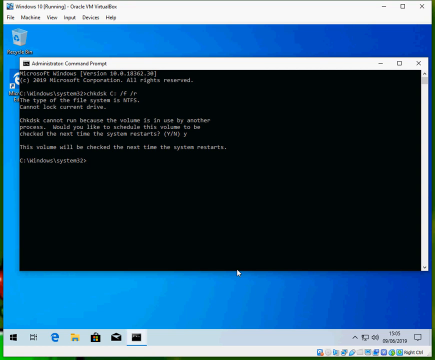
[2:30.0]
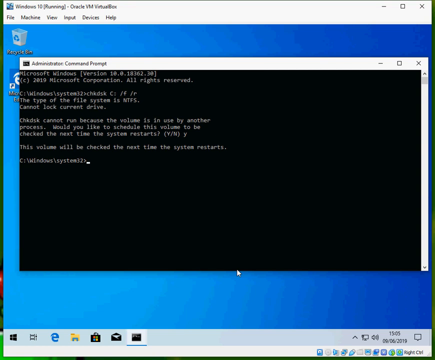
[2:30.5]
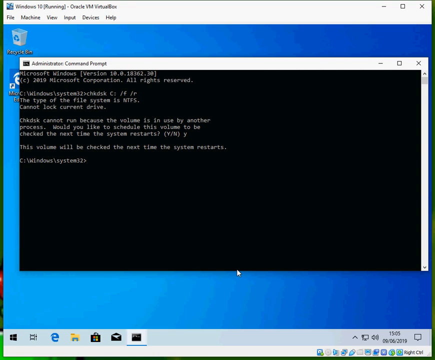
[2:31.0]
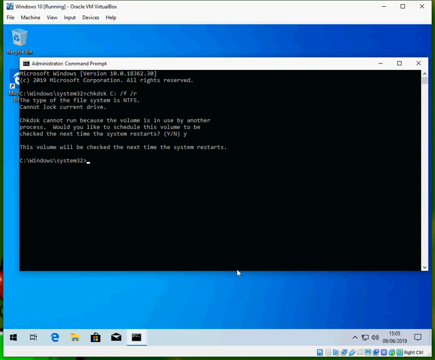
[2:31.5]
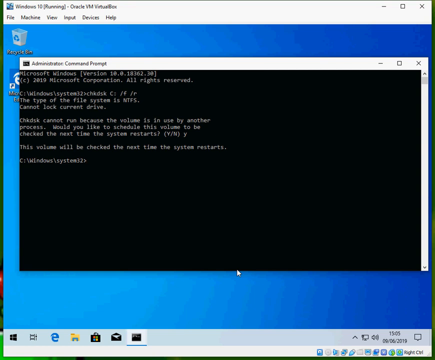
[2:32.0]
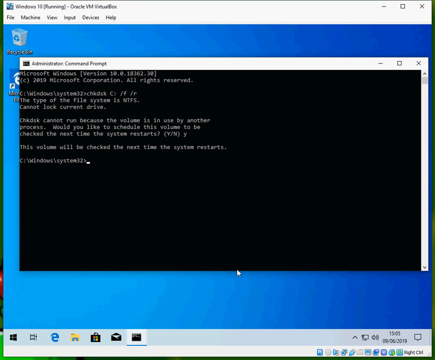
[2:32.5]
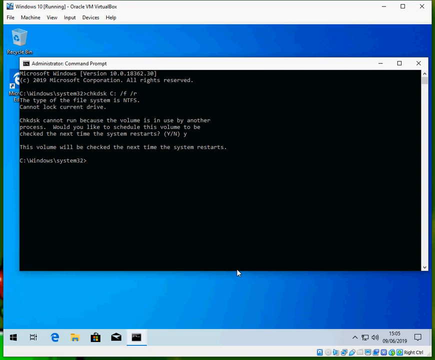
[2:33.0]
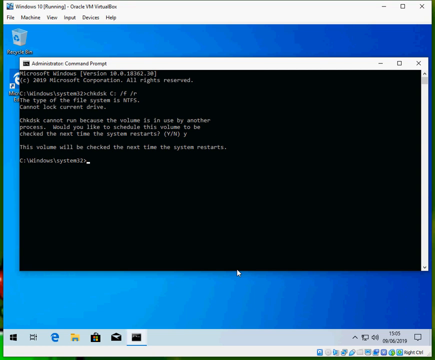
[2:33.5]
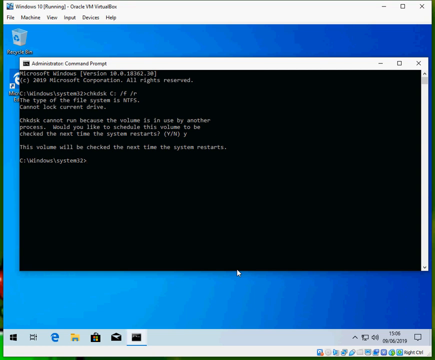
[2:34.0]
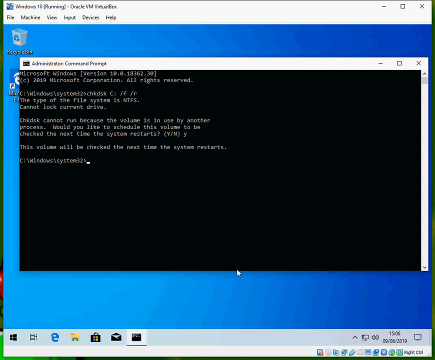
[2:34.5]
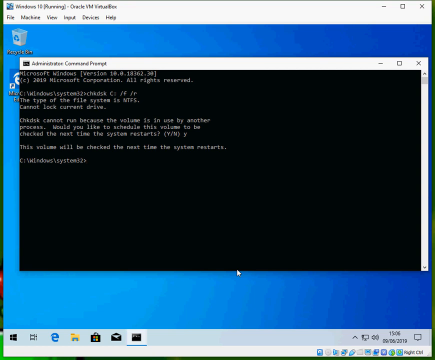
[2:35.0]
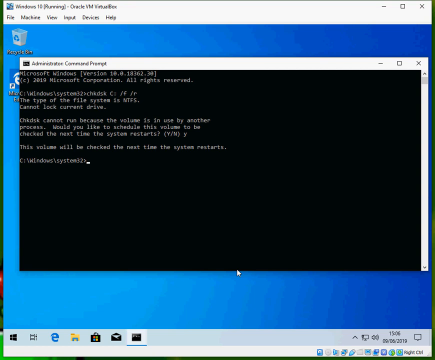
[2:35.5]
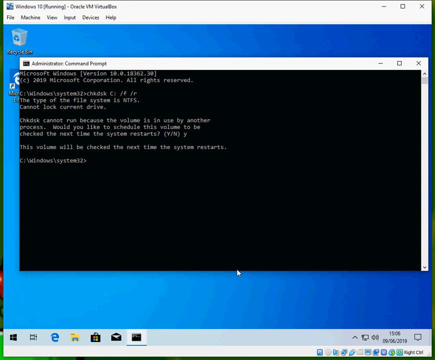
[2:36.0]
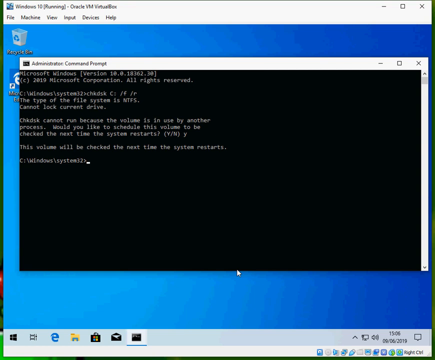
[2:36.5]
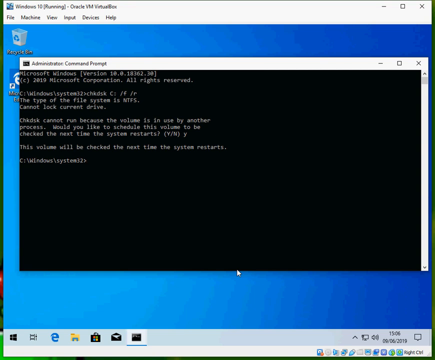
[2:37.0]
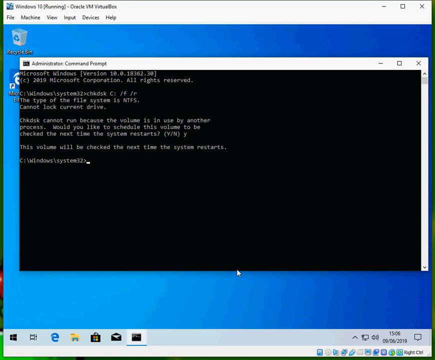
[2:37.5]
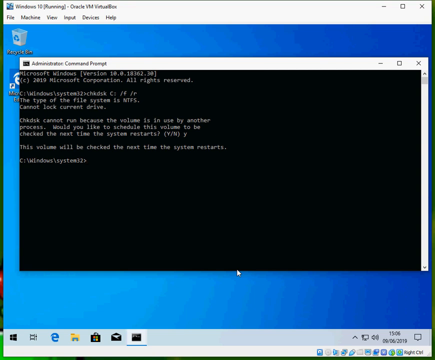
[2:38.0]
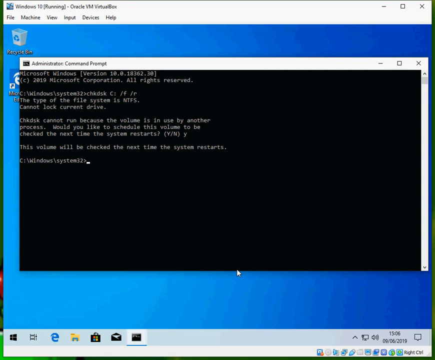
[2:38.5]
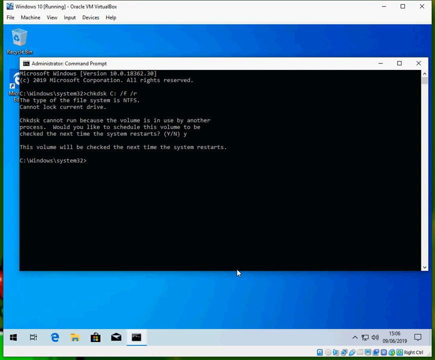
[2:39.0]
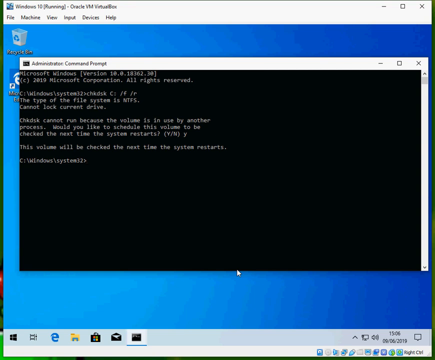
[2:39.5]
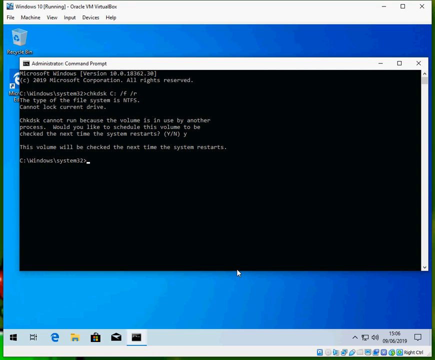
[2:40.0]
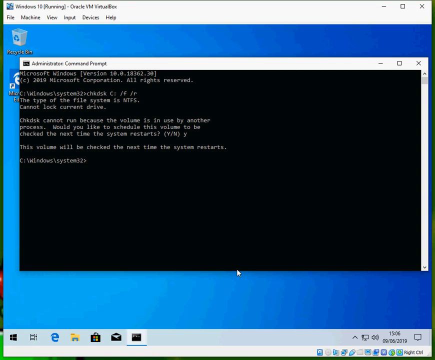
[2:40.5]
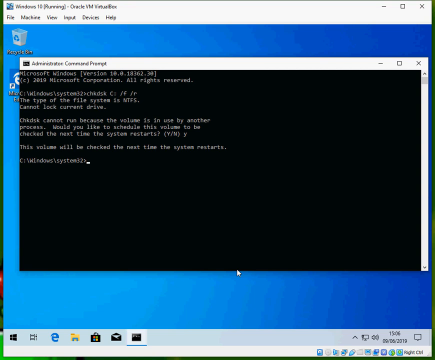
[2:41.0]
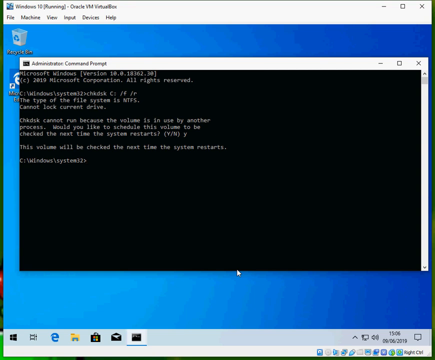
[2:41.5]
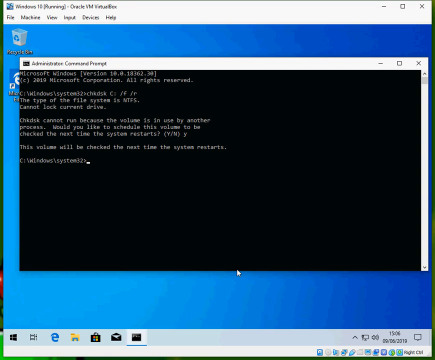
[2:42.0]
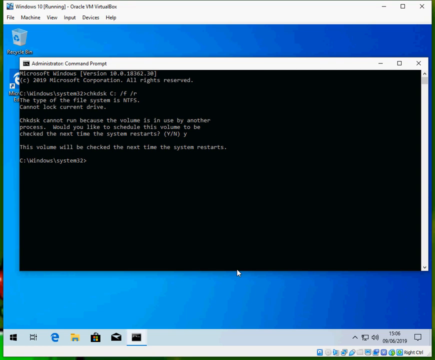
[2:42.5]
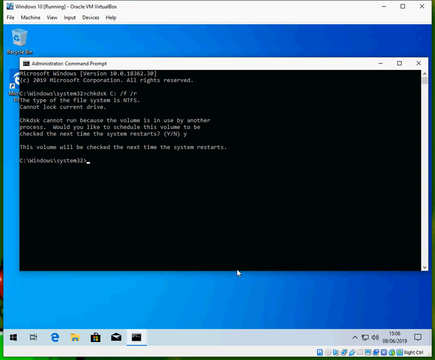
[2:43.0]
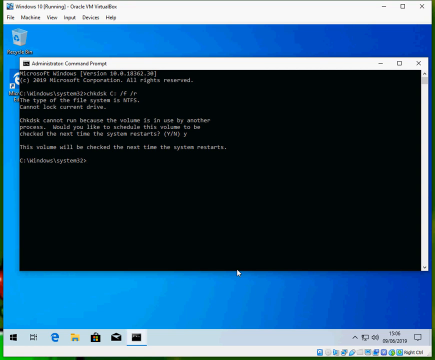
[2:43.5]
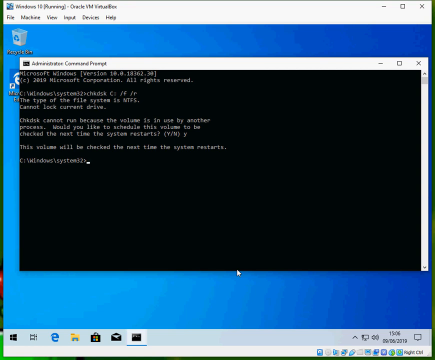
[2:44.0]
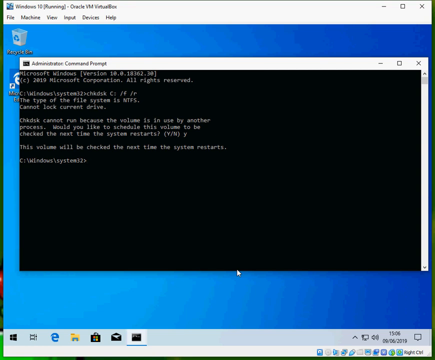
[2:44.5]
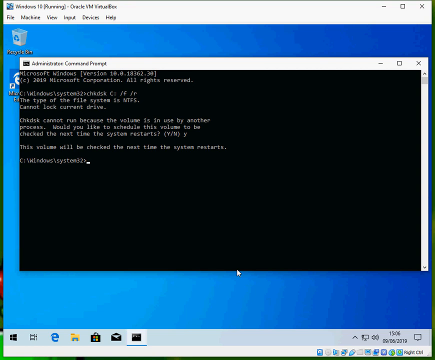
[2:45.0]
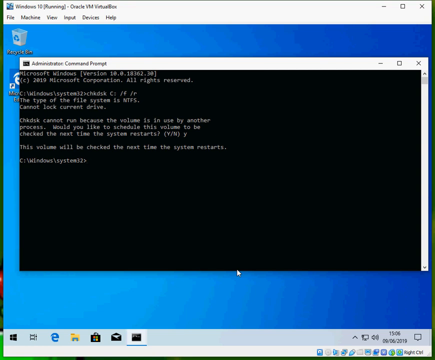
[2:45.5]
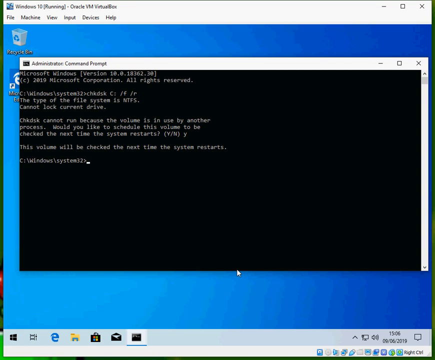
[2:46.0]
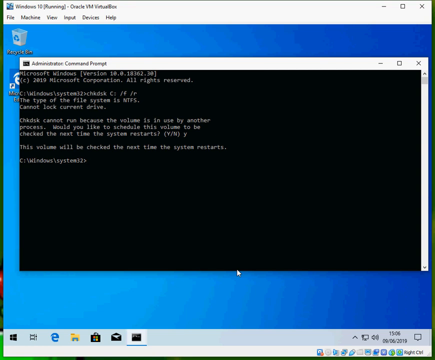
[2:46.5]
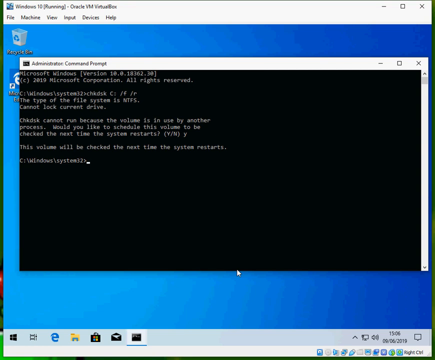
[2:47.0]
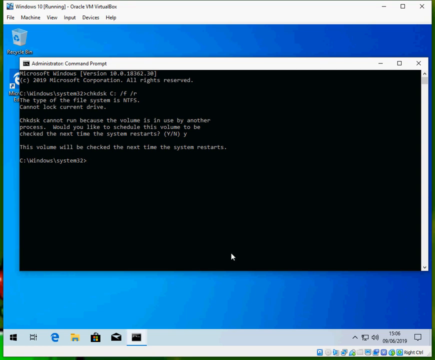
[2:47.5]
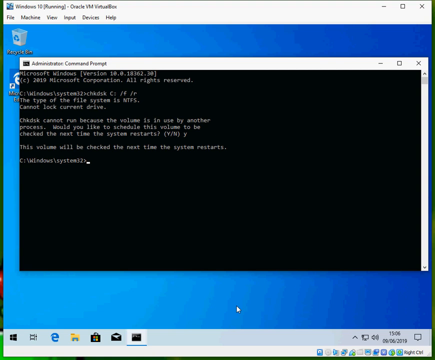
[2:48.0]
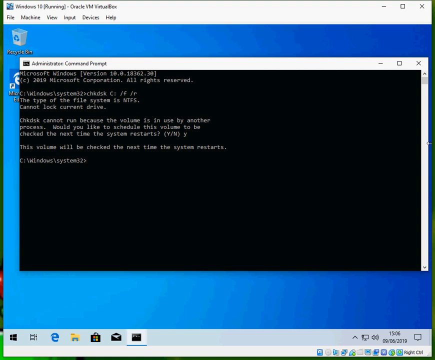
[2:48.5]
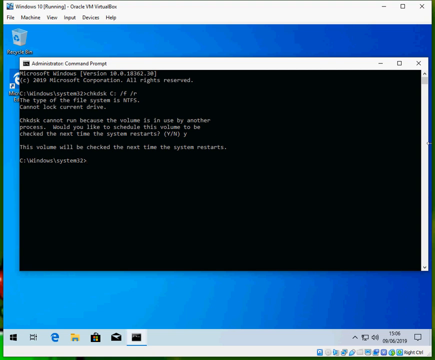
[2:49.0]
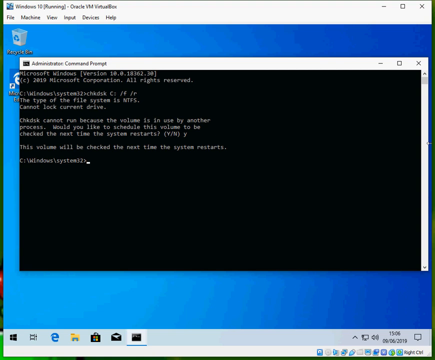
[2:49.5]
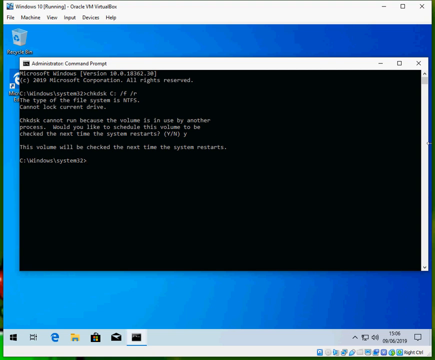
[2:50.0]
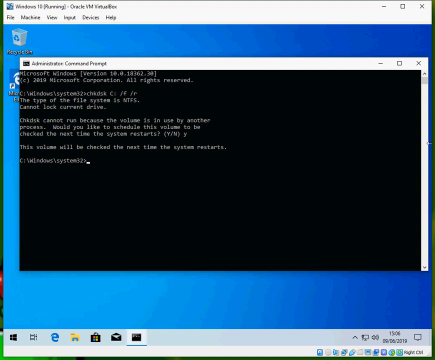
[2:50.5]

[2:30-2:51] A Windows PC page shows the blue Windows background with two shortcuts, one for Microsoft Edge and one for Recycling Bin. There are tabs for File, Machine, View, Input, Devices and Help. An administrator command prompt is over top of the page, with a white border, a black body, black text that is code, and a blinking white cursor. Code appears in blocks of text. The video then transitions to another Windows page that reads "your PC ran into a problem and needs to restart. We're just collecting some error info, and then you can restart," and says it is 100 percent completed. A person moves the cursor around the box and the text as if reading it.